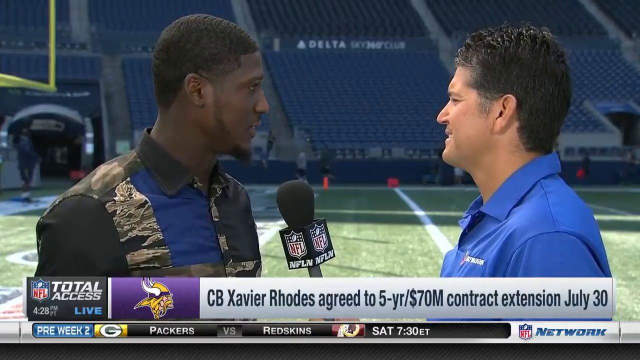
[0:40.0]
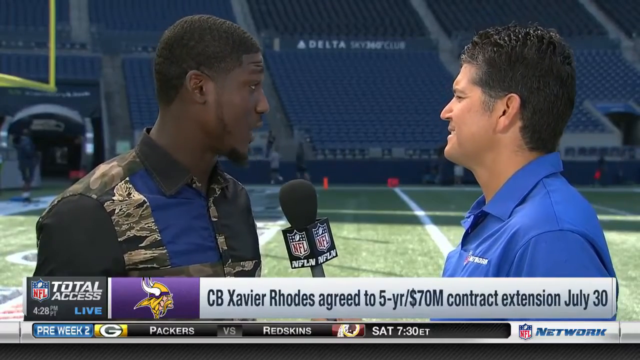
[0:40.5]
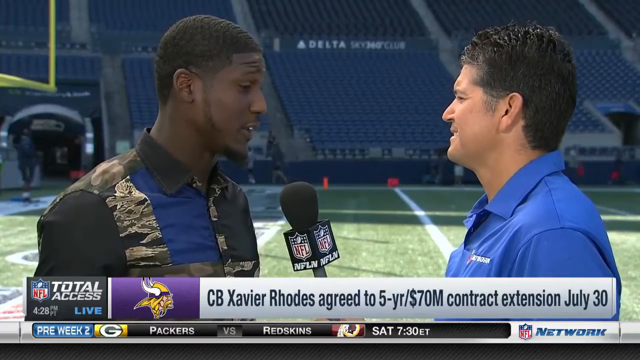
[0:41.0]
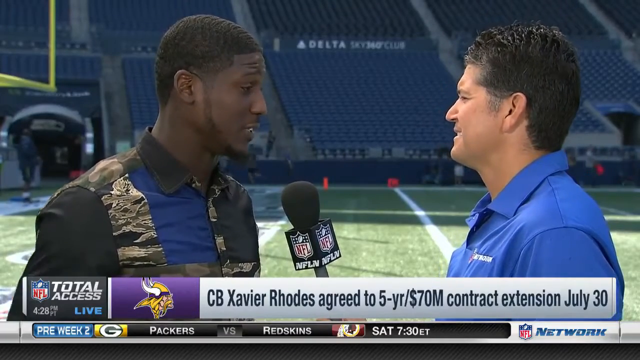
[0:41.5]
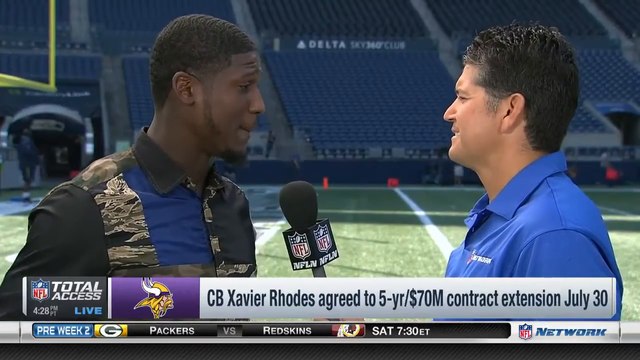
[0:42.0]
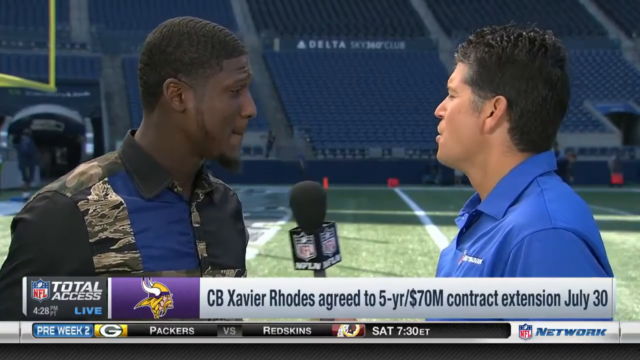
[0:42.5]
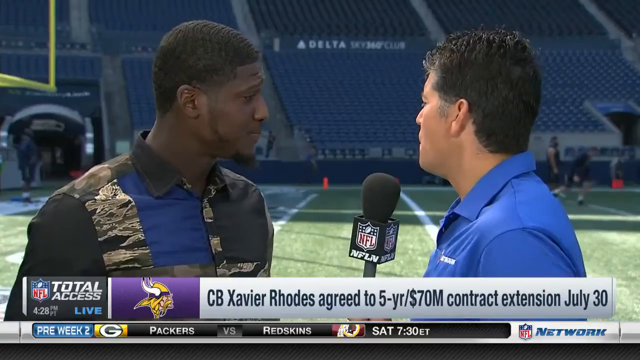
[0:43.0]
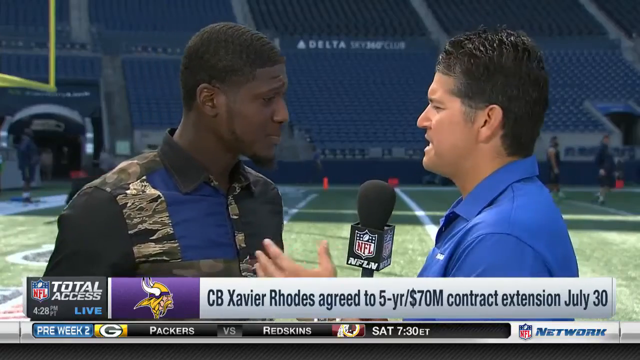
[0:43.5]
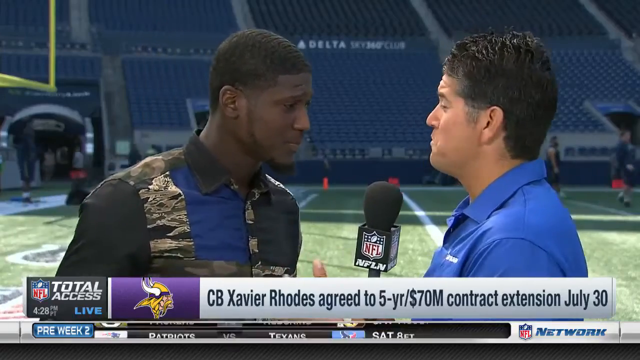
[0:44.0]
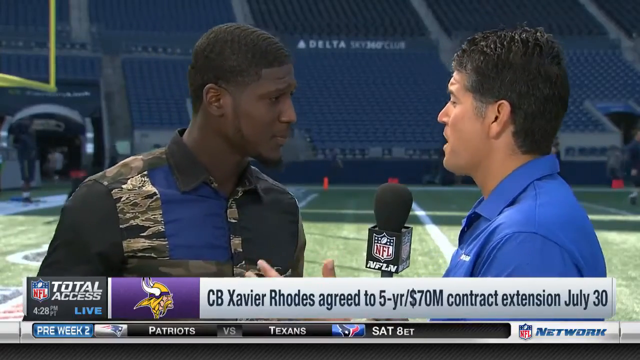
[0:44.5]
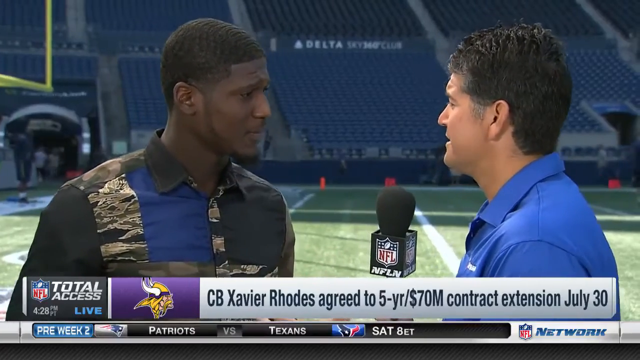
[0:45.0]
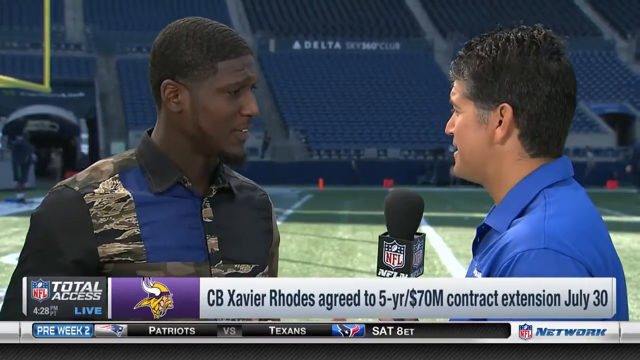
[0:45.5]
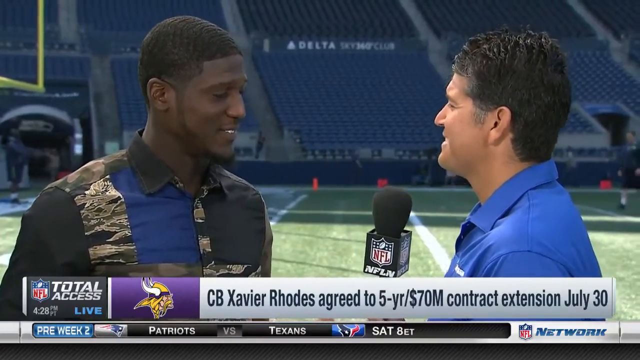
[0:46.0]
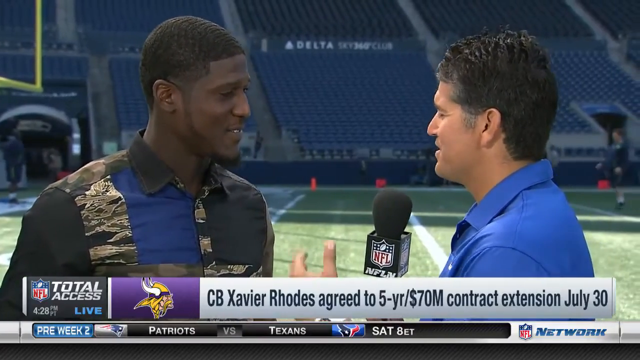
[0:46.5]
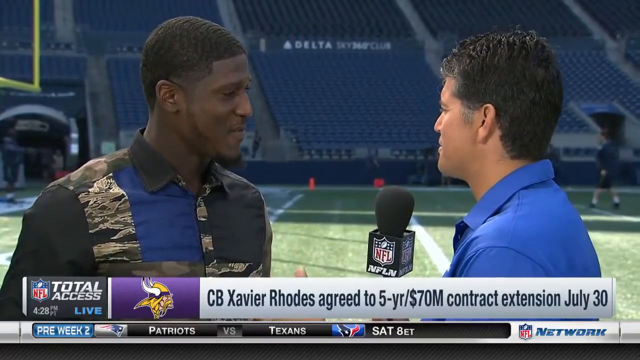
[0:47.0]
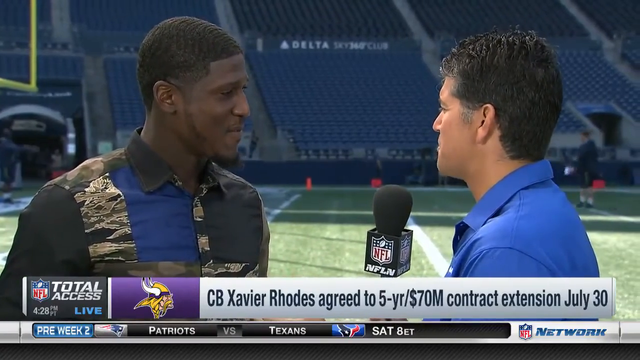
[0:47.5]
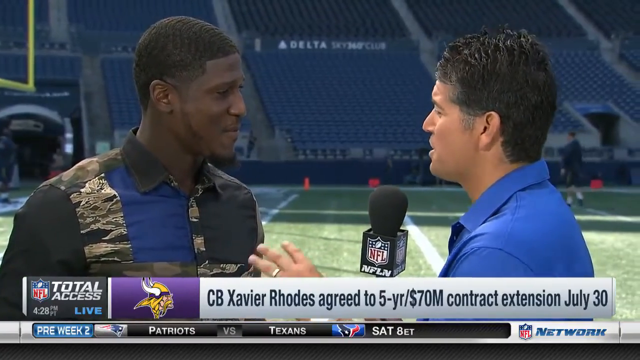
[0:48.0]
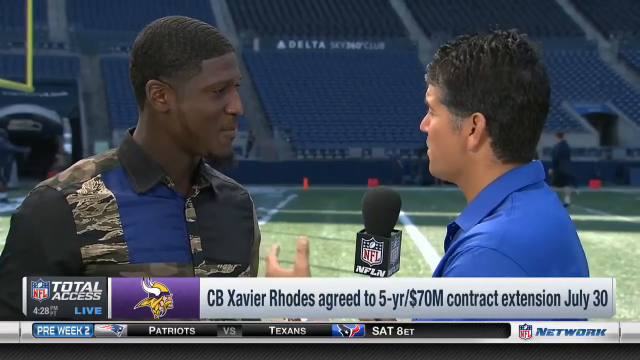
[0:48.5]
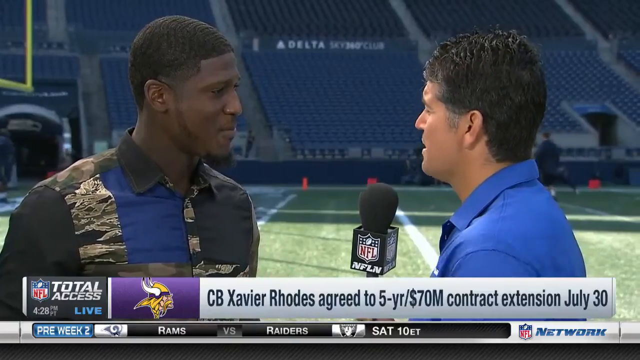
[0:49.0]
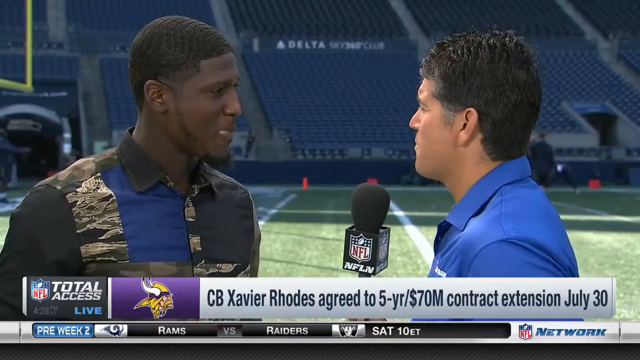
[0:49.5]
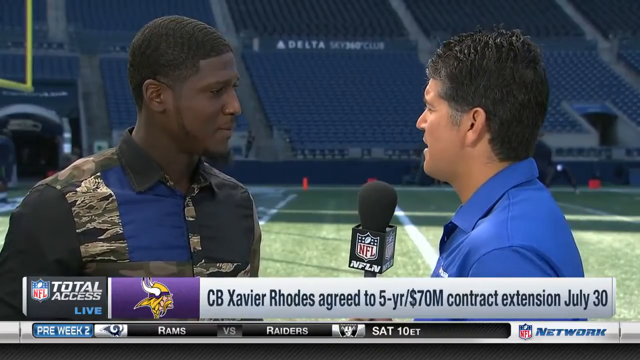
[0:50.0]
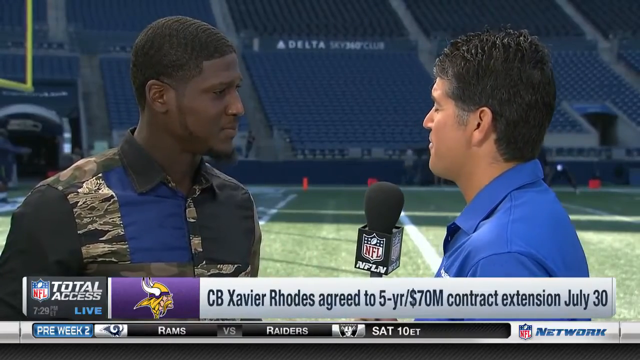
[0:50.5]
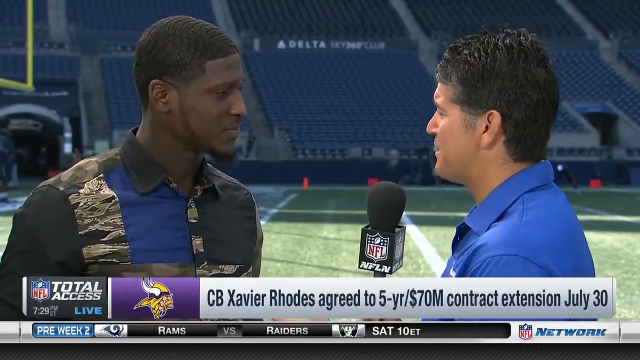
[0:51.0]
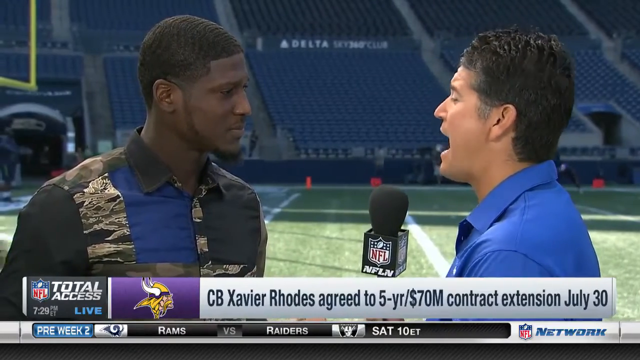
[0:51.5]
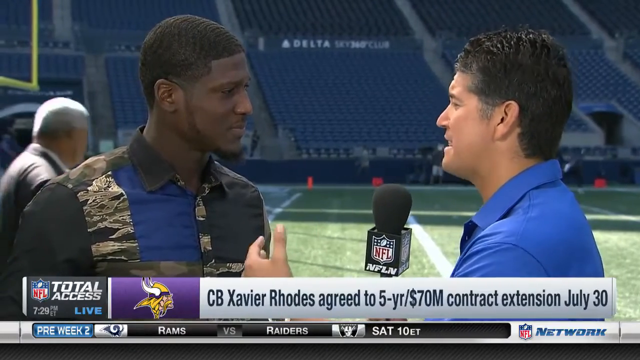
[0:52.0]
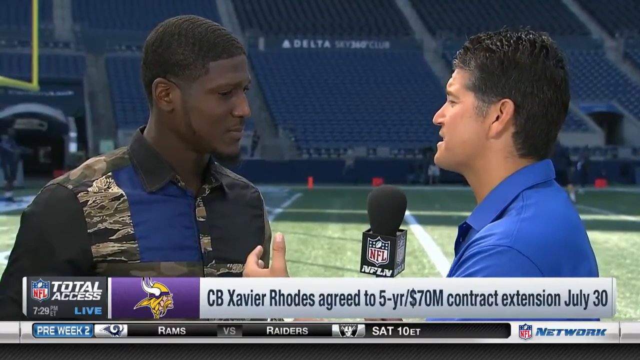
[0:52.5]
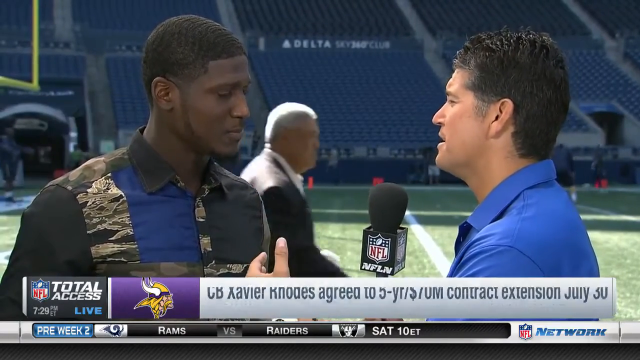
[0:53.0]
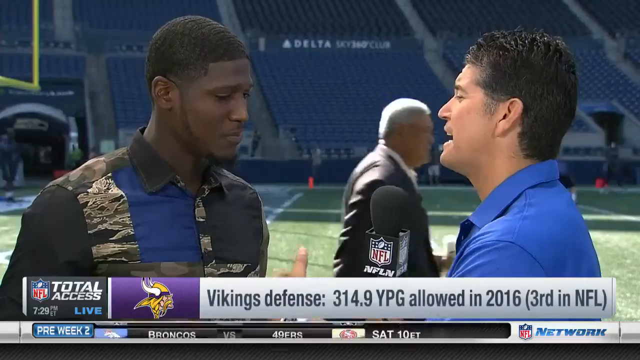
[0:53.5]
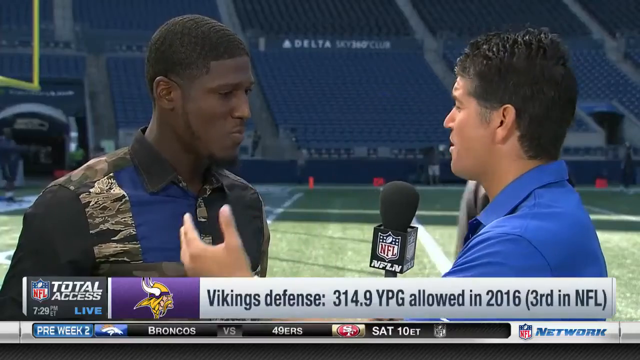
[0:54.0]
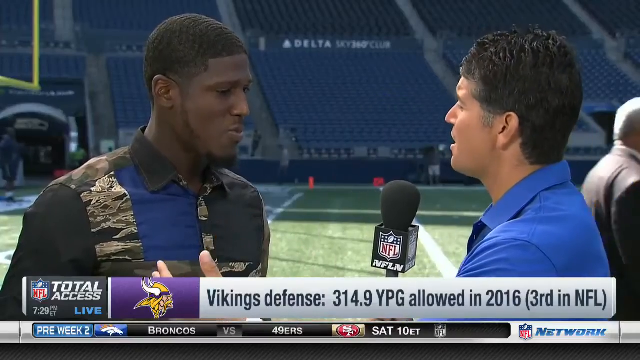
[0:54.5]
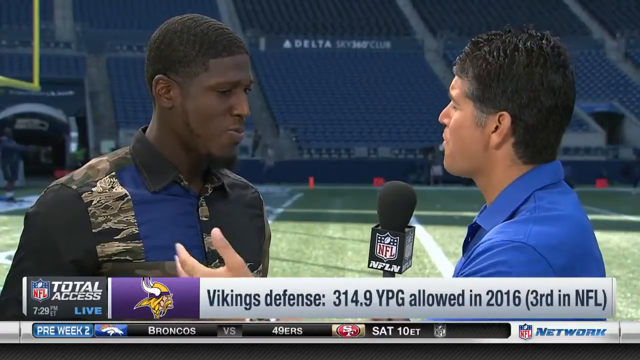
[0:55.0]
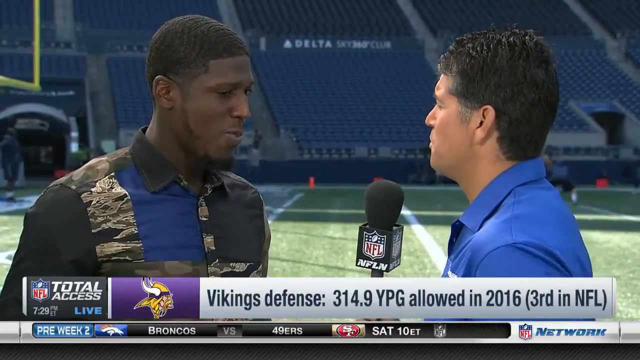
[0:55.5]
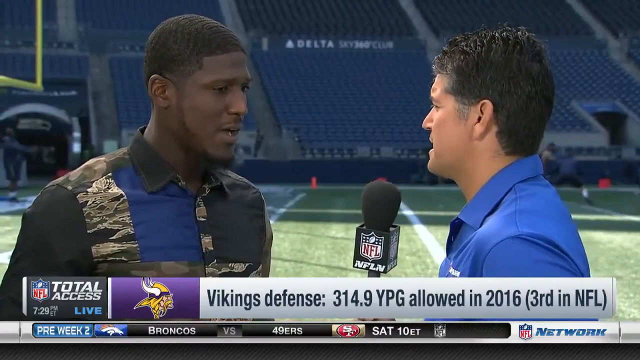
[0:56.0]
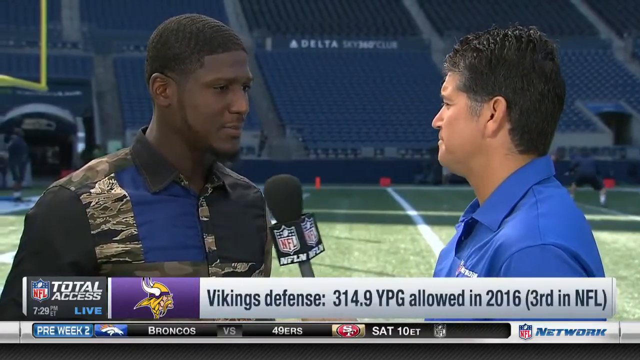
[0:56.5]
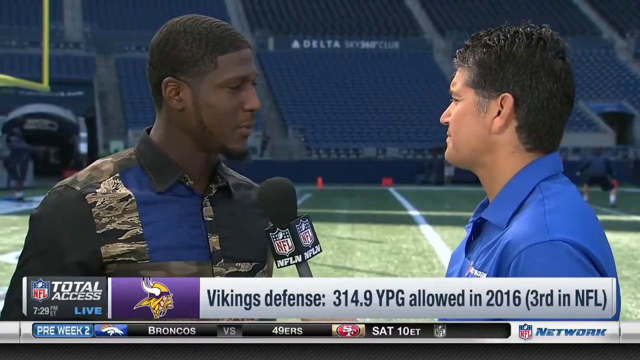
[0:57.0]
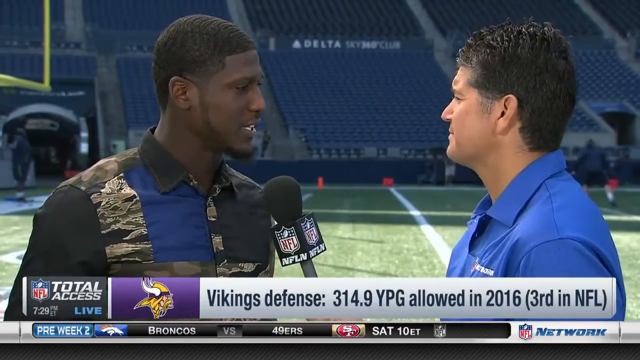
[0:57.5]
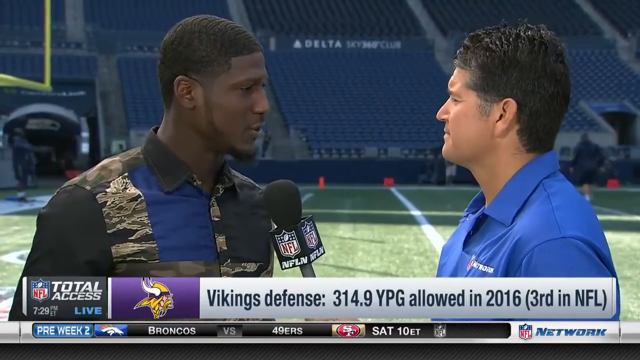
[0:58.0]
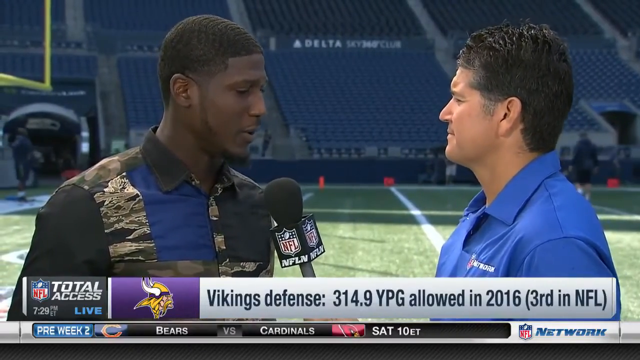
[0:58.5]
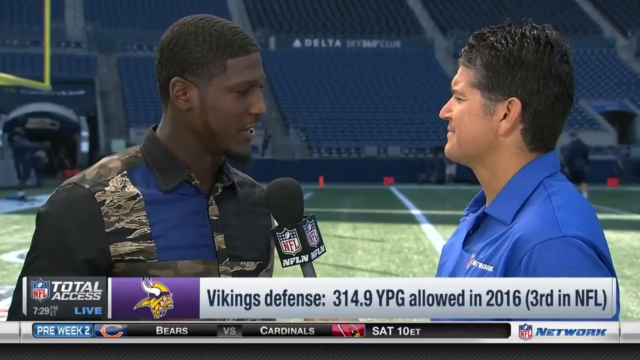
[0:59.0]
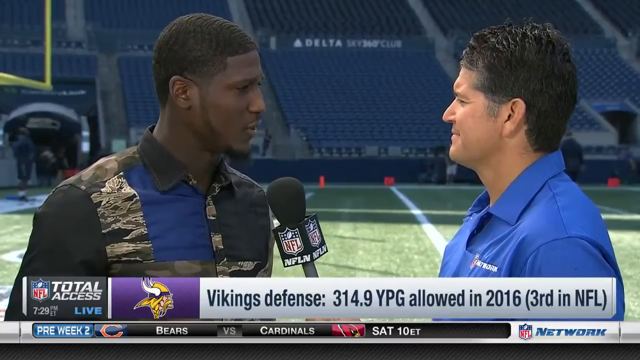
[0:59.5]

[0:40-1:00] Two men stand at the edge of an American football pitch, possibly a rugby pitch. Text graphics at the bottom of the screen relate to the NFL and show a sports news headline. The men face each other with their shoulders towards the camera. The man on the right holds a microphone, interviewing the other man, and points it towards the man on the left, who talks into it. When he finishes talking he purses his lips, and the man holding the microphone moves it to point underneath his mouth. His left hand comes out with fingers splayed as he talks, seemingly to emphasise points. They both smile and nod at each other. The man continues to talk into the microphone while the other man looks intently at him. In the background a large gentleman in a suit walks past from left to right. The man holding the microphone then moves it to point to the mouth of the other man, who talks while staying fairly still, only his lips moving.